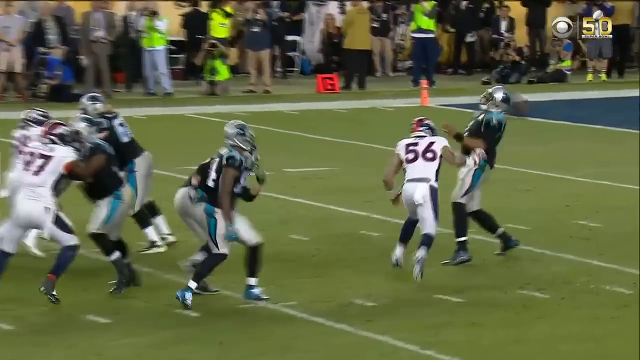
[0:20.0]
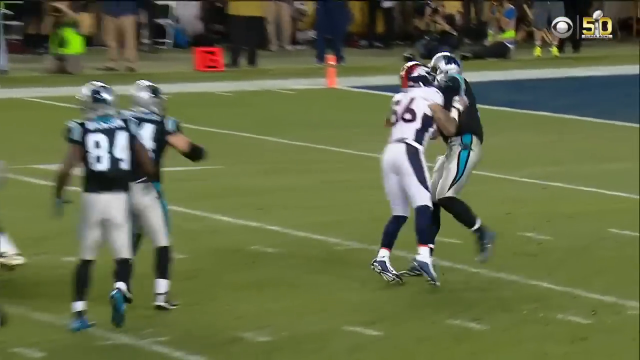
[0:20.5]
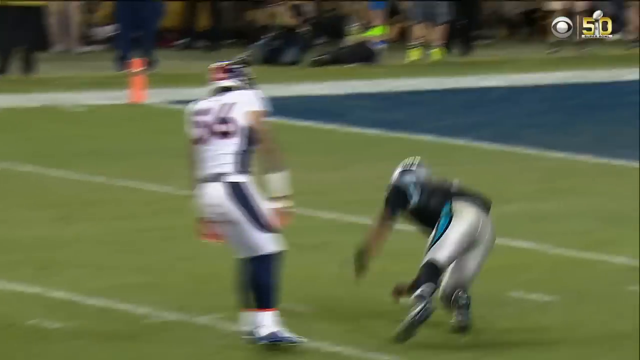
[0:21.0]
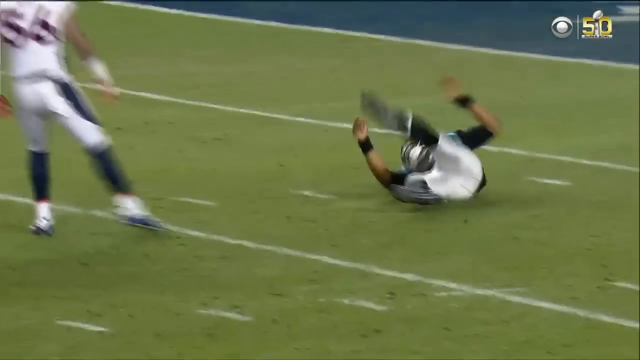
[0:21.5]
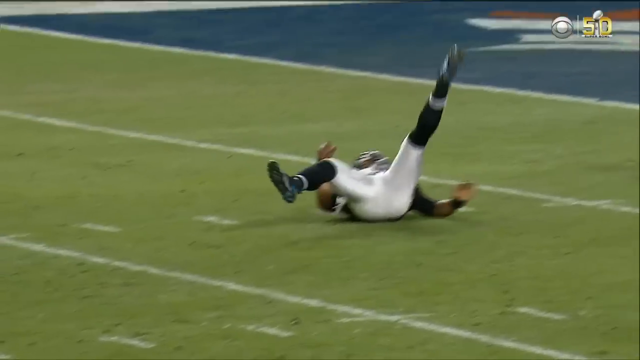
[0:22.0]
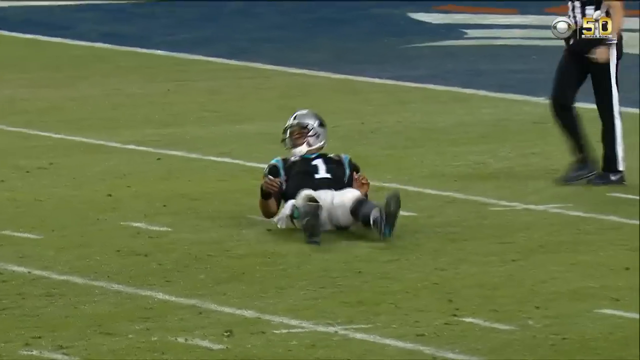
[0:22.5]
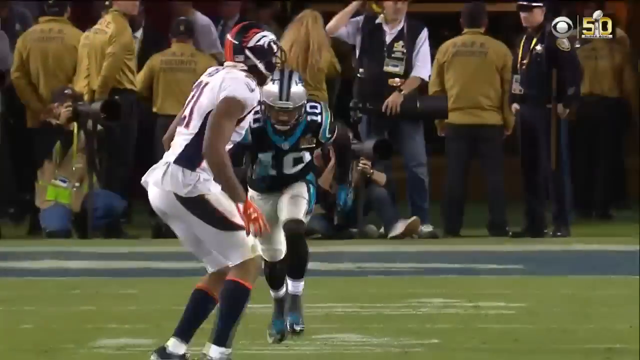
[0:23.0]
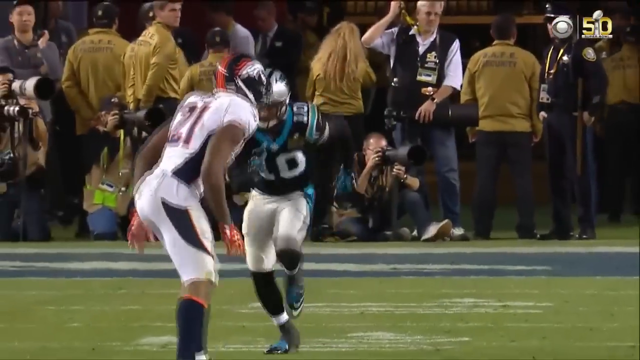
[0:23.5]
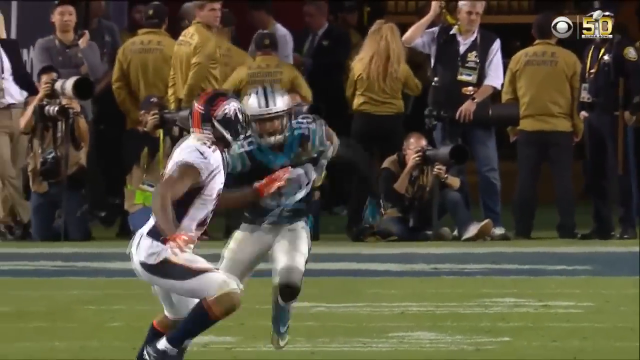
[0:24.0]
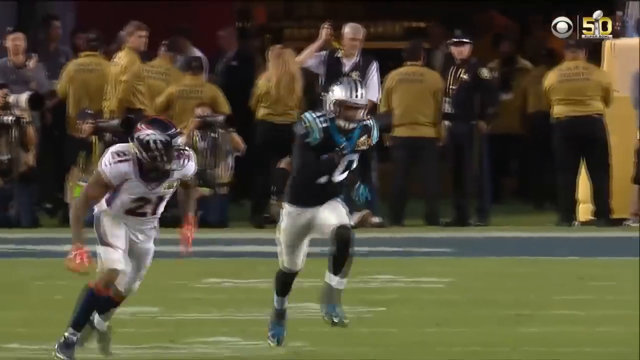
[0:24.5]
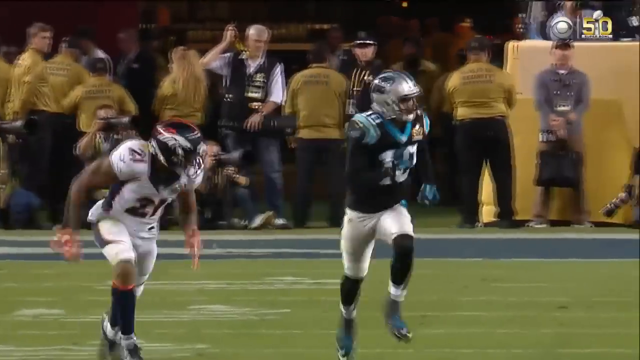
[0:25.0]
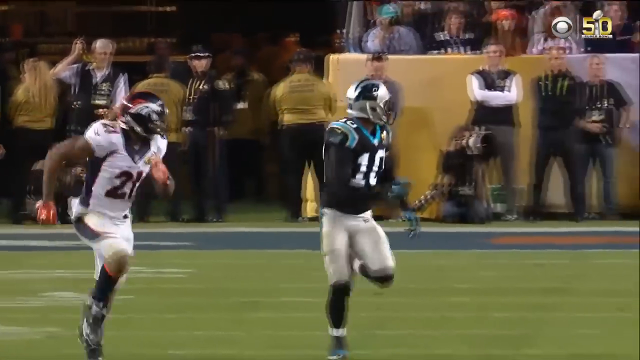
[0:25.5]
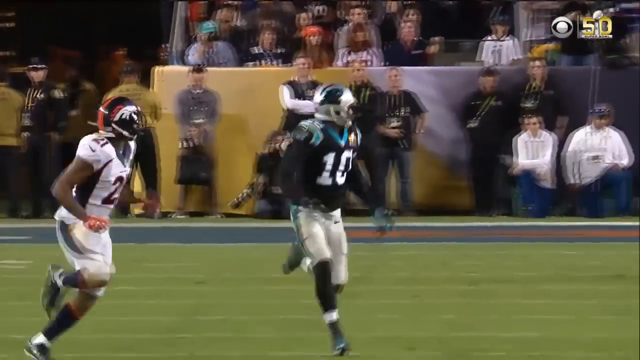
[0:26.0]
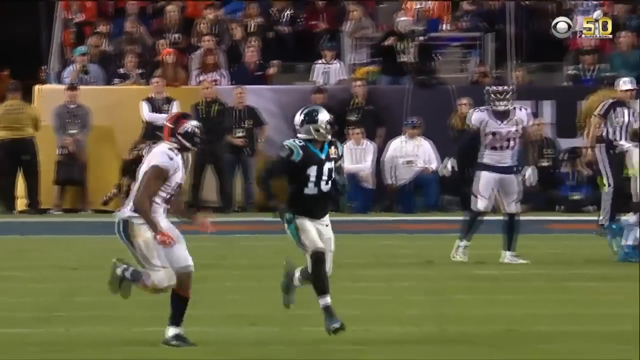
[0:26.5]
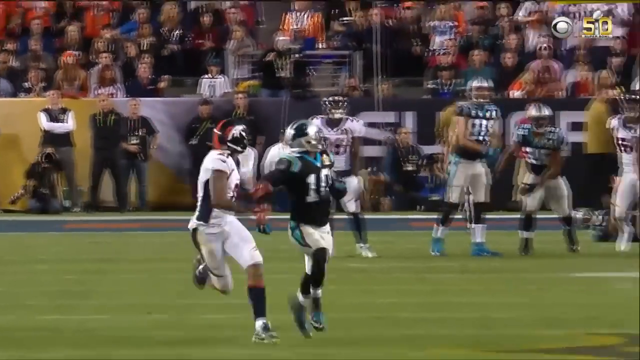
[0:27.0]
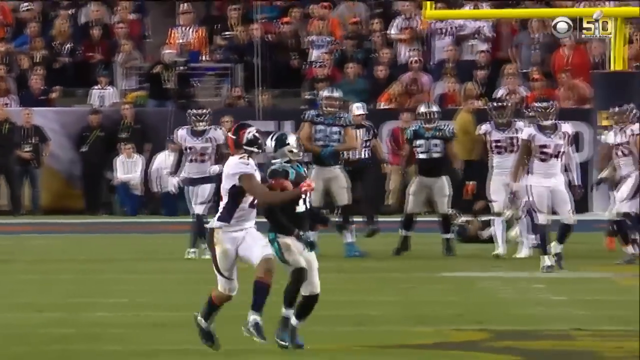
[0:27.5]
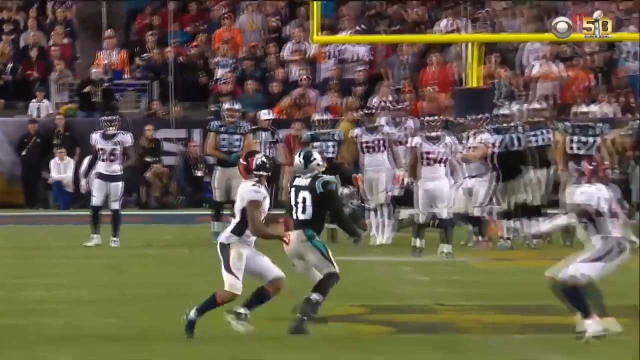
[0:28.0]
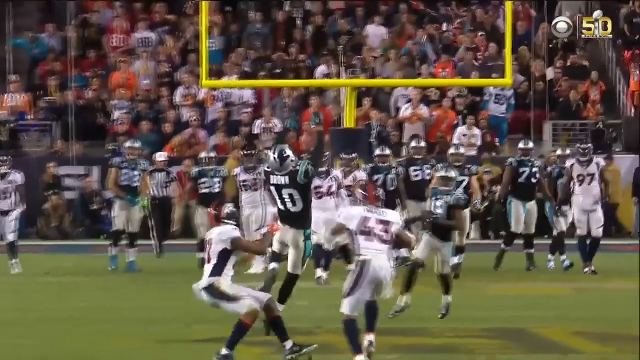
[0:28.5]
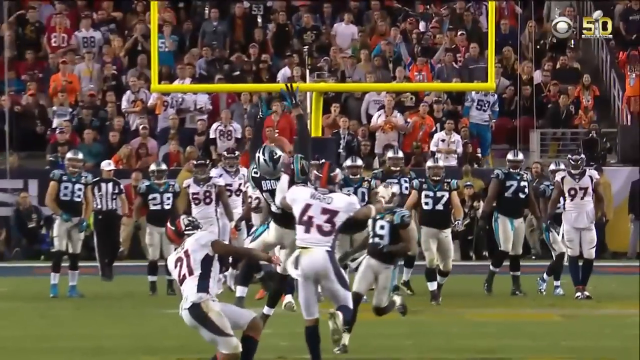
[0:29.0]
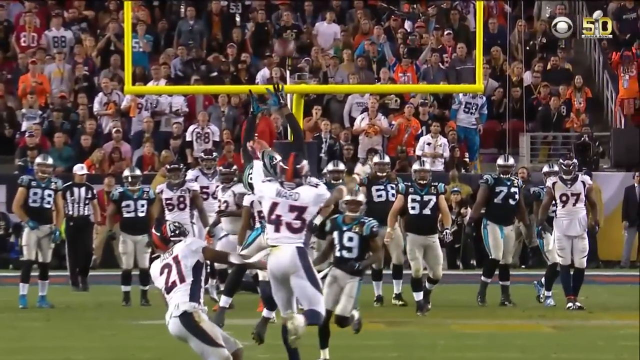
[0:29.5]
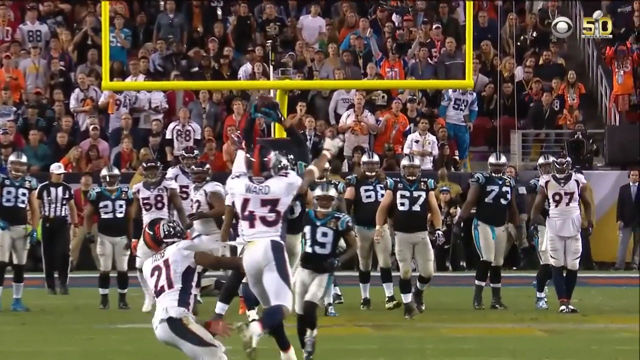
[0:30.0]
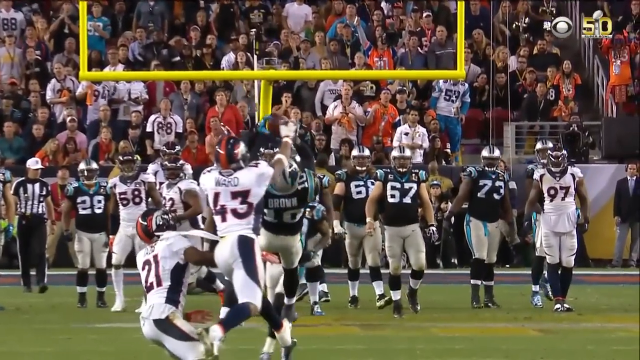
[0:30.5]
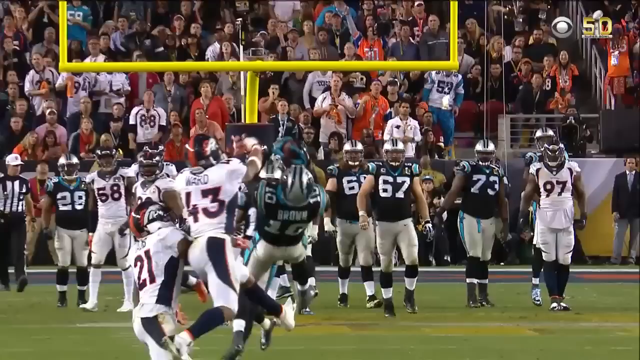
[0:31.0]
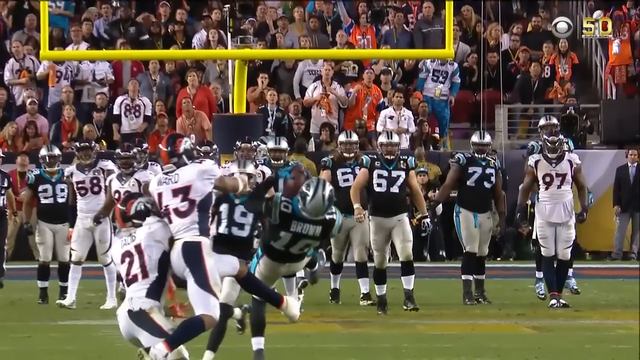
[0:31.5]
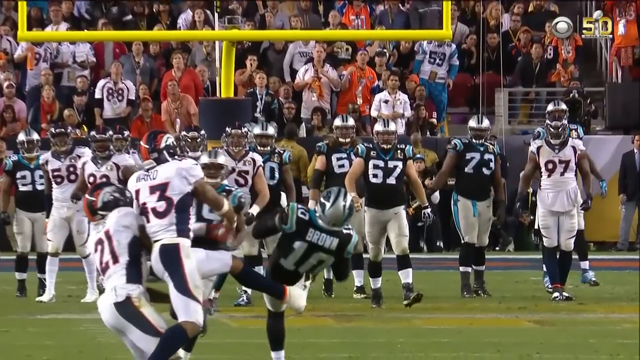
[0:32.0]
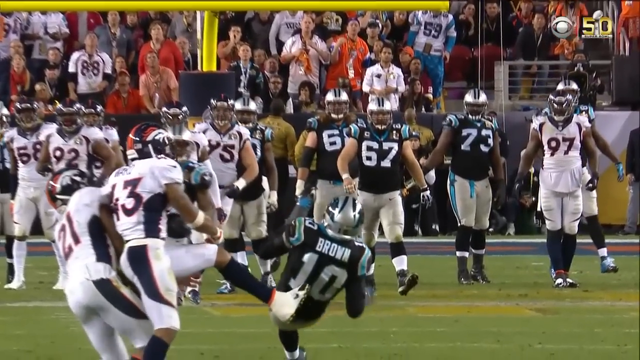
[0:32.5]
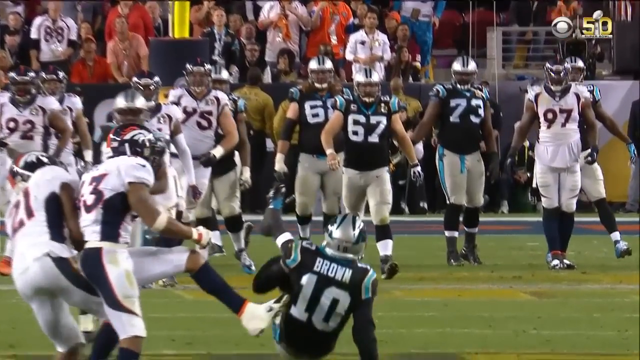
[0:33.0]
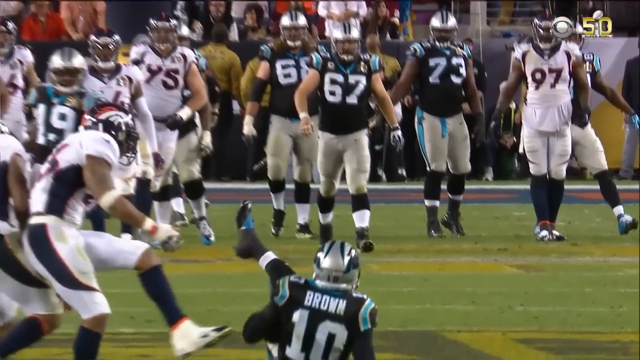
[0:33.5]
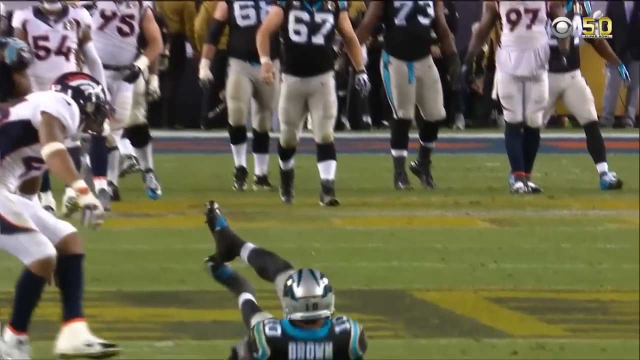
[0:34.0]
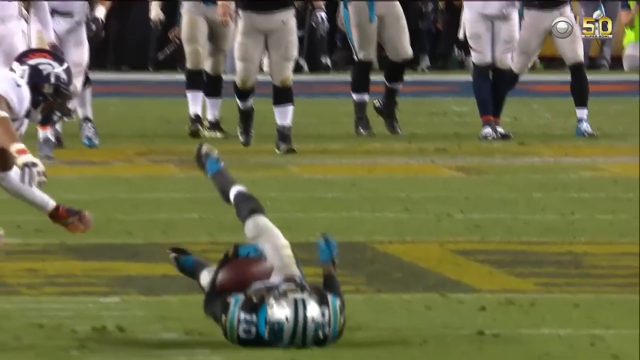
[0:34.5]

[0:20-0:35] The Super Bowl 50 game between the Carolina Panthers and the Denver Broncos, both NFL teams, continues with a replay of Panthers quarterback Cam Newton throwing the football and completing a pass to one of his wide receivers, number 10. A slow-motion replay shows him delivering the pass, and another angle shows Cam Newton getting tackled after completing the pass. The CBS and Super Bowl 50 logos appear in the upper right-hand corner. Several staff members are shown around the stadium, along with fans watching the game.